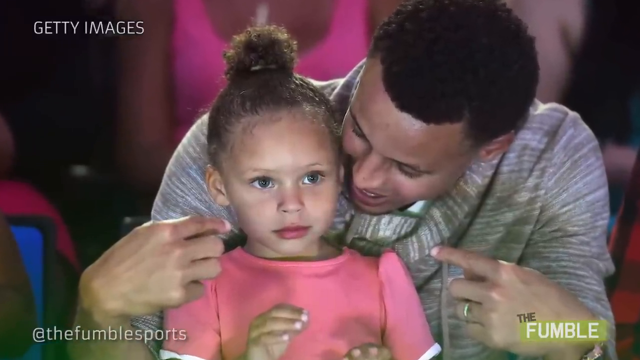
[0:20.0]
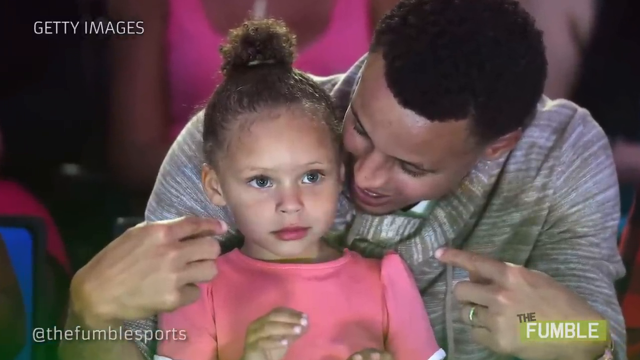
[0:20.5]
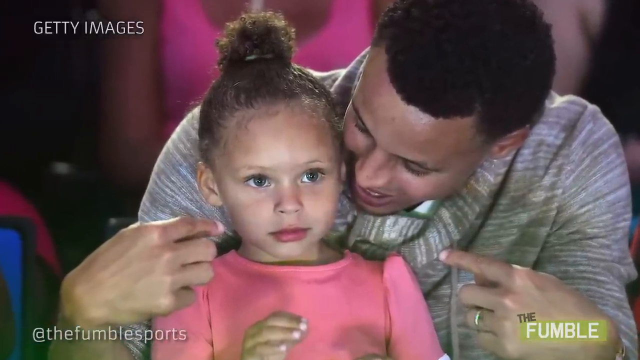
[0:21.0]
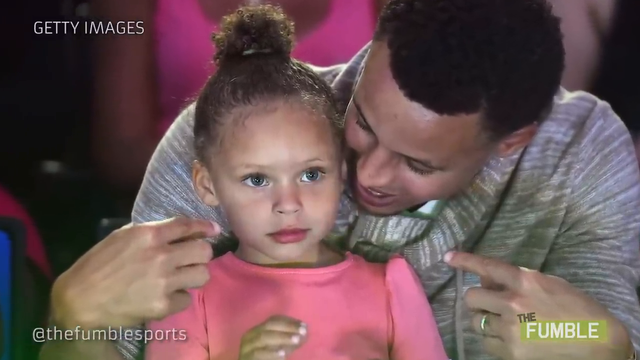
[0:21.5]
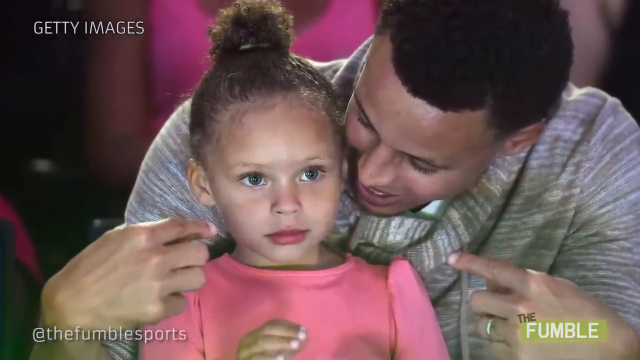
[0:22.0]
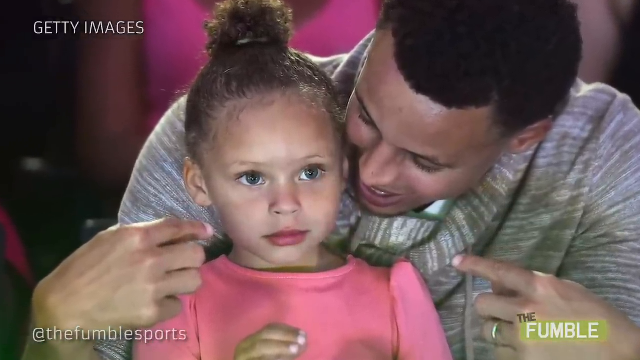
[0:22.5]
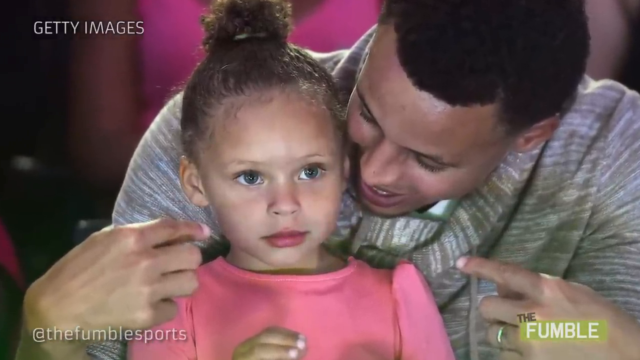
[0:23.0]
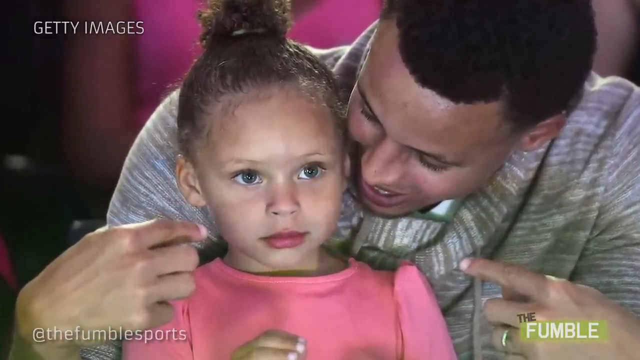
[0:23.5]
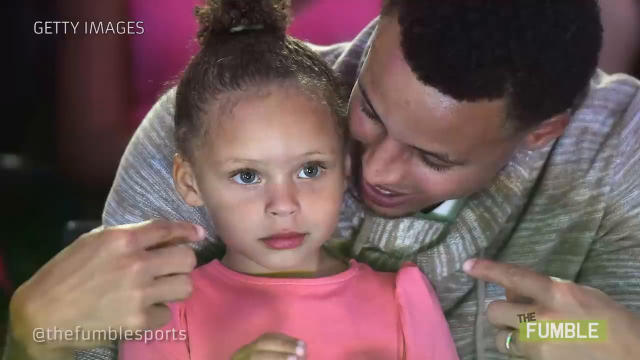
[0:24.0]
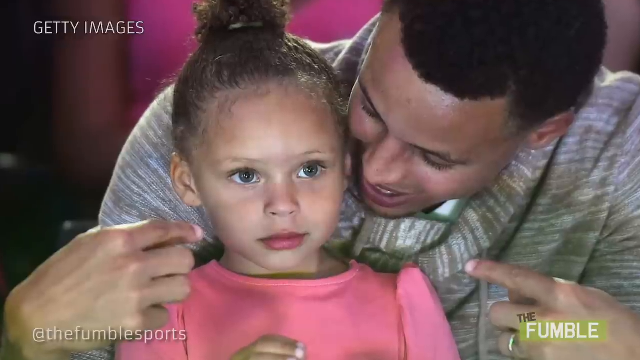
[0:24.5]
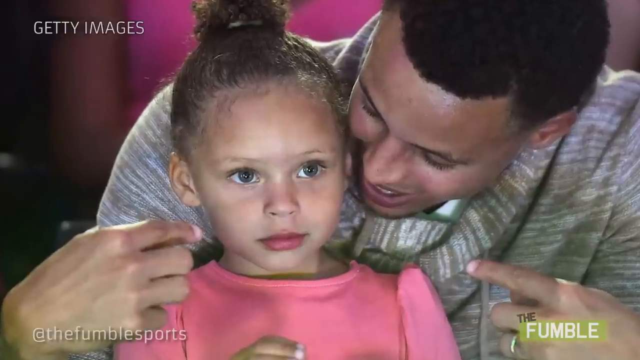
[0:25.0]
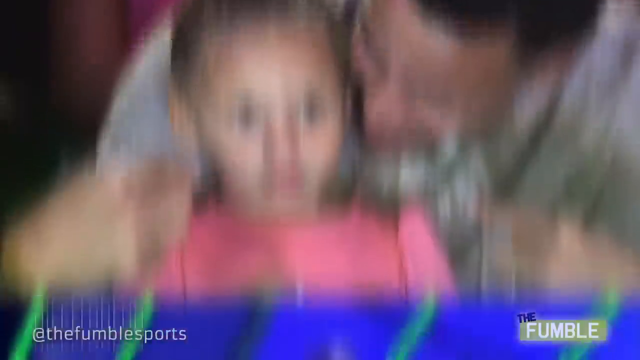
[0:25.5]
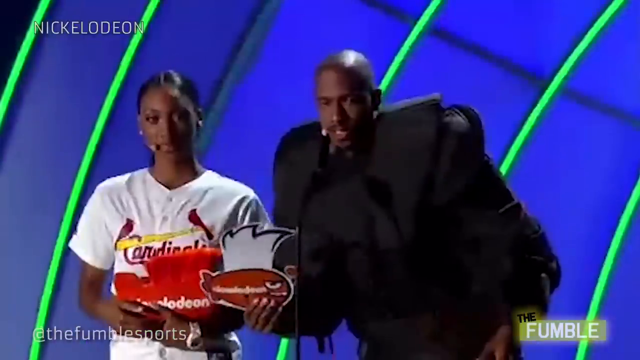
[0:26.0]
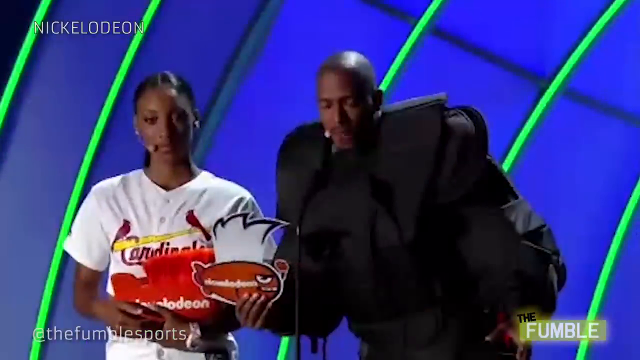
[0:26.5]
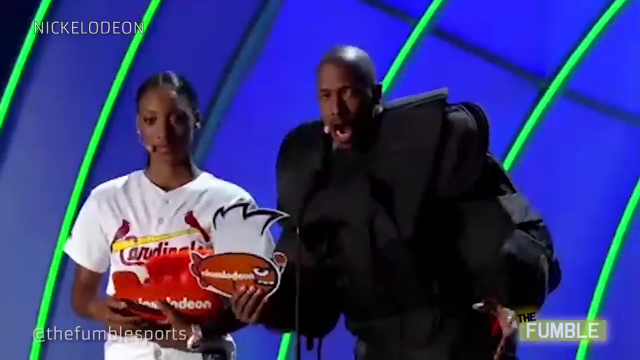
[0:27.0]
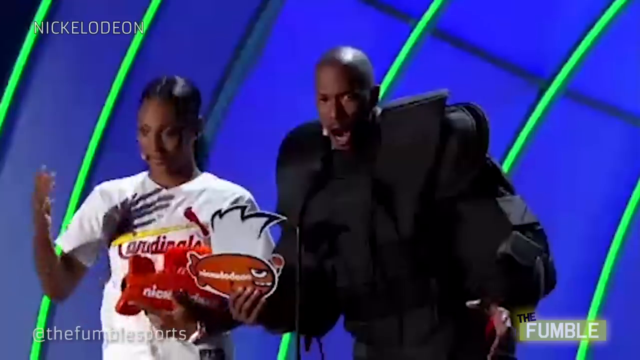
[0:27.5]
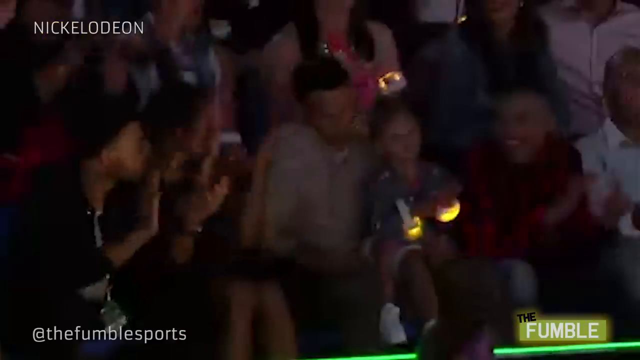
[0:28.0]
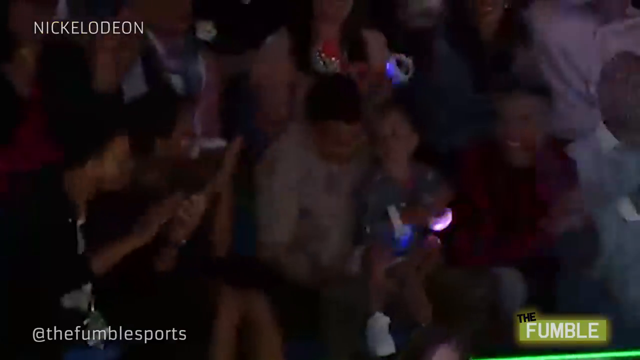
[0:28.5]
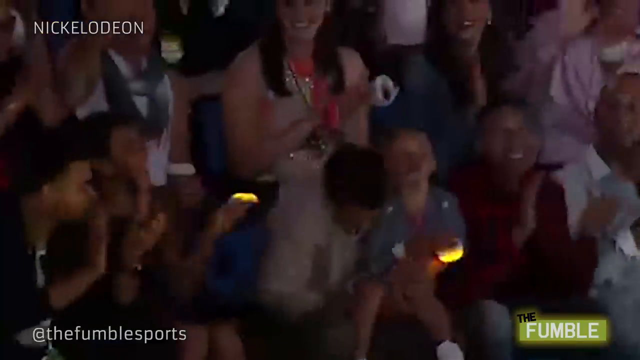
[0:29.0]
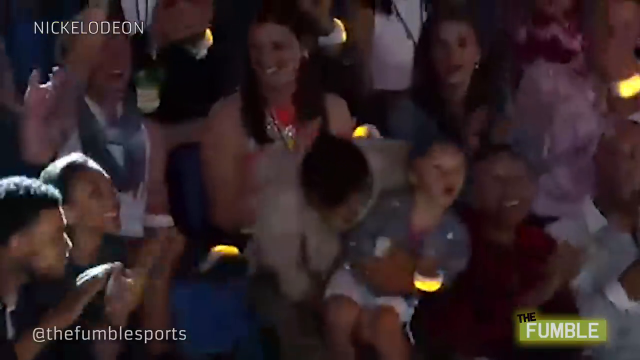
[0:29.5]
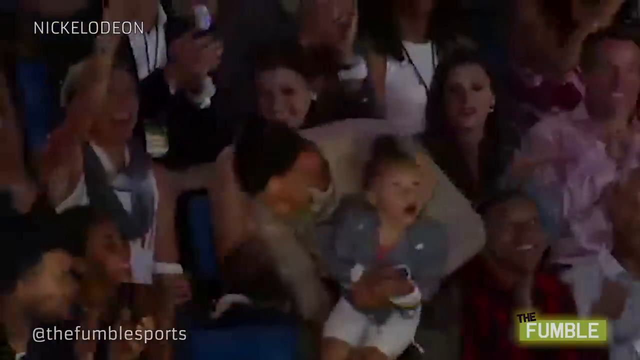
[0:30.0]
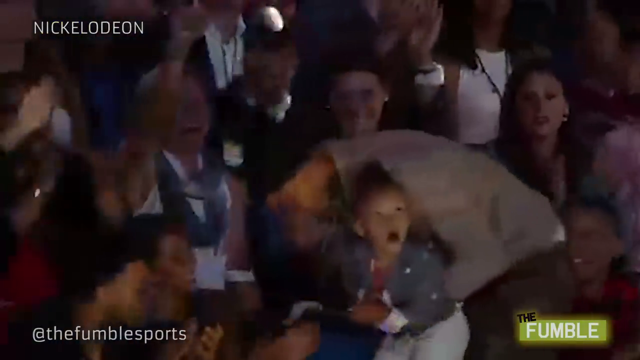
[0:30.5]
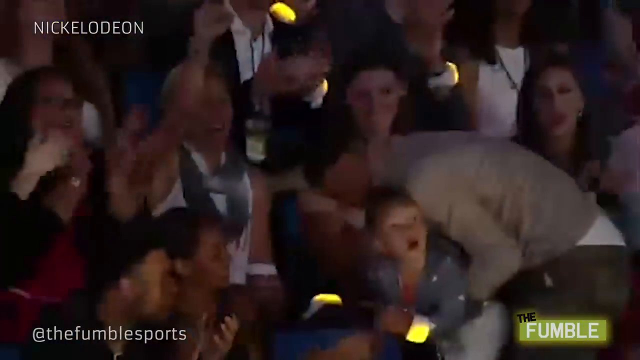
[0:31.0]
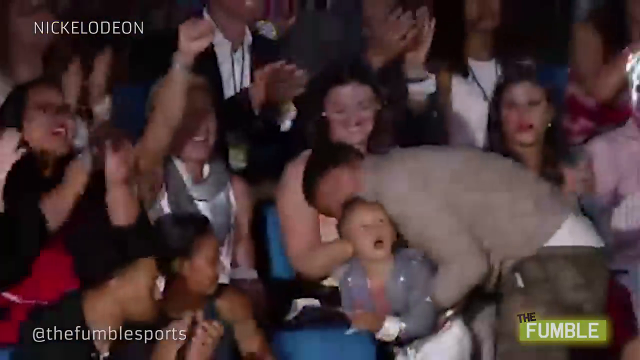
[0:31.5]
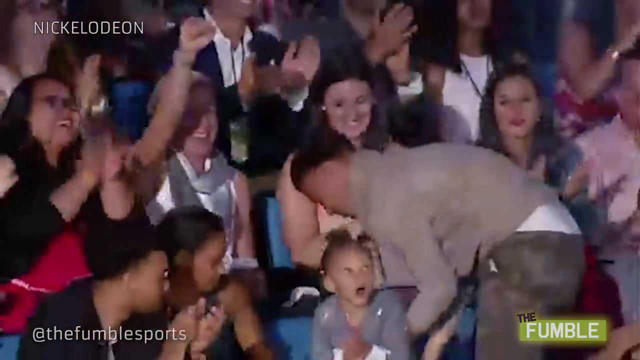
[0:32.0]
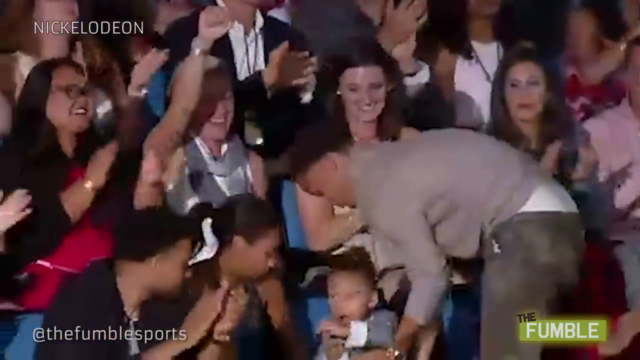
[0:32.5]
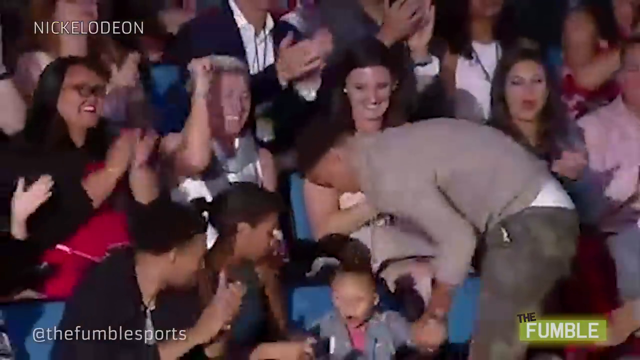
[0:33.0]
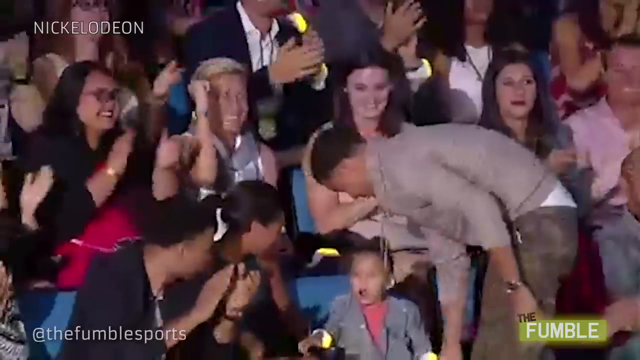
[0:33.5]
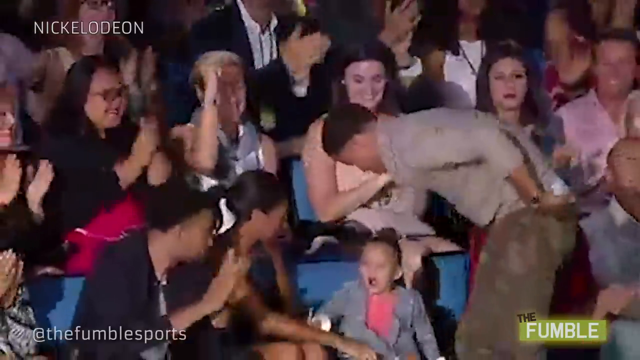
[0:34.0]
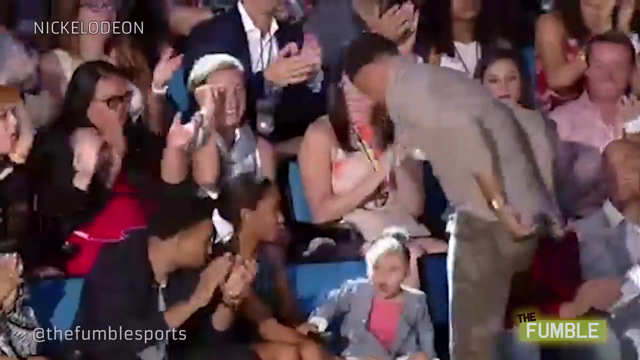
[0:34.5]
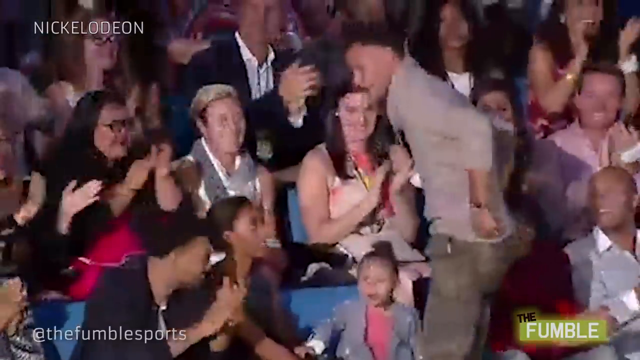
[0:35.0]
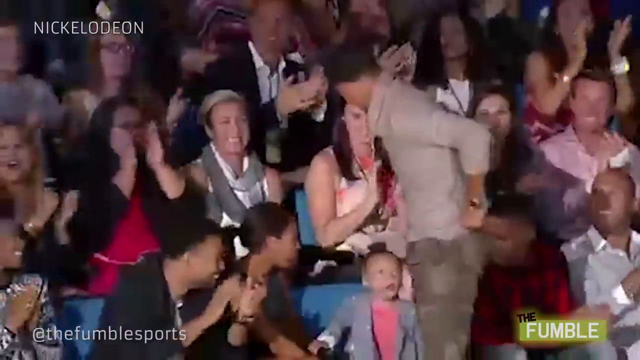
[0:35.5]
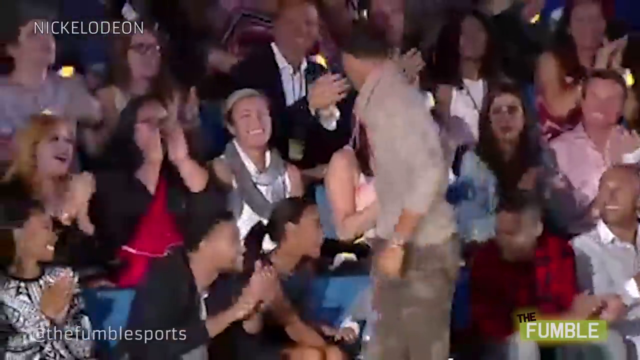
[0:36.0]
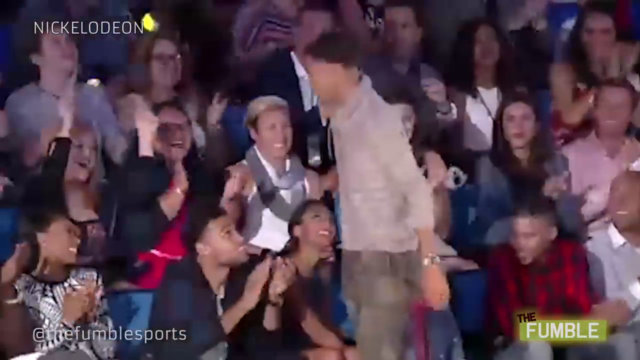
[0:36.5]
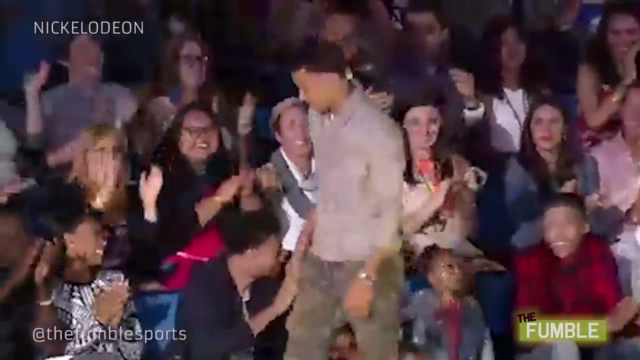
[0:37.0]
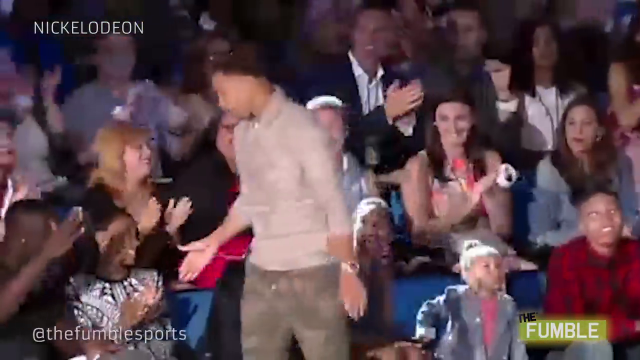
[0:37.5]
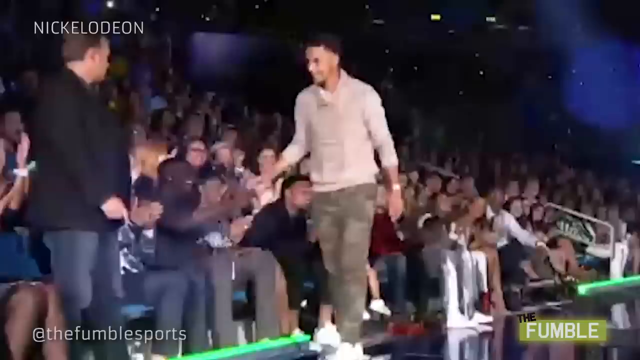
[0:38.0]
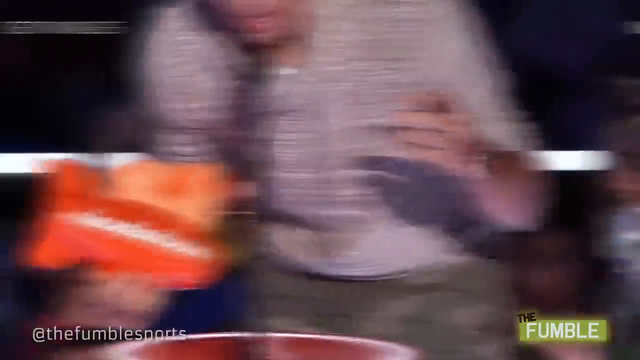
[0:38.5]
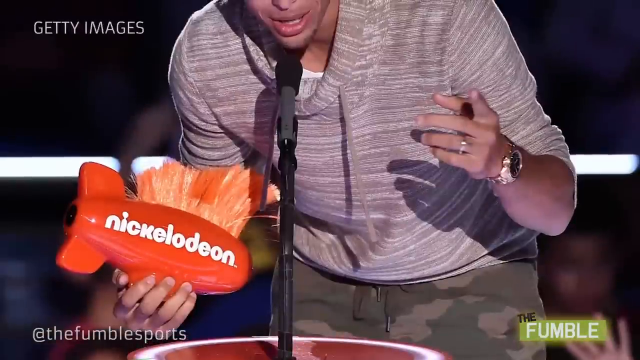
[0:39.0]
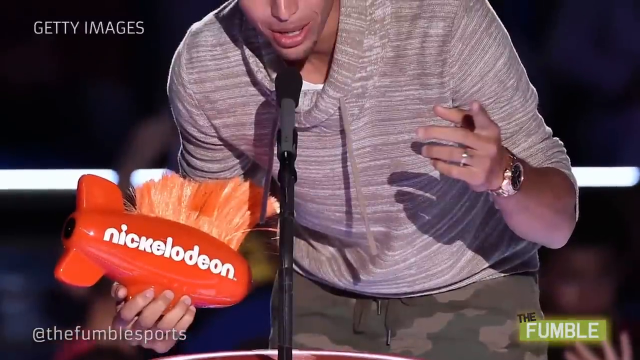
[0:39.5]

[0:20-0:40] The man is smiling and bending over. The child, probably about five years old, is sort of looking off into the distance as the camera pans in on her face. He lifts up his hands as though pointing at her. The camera continues to sort of zoom in, and then a video appears that looks like it comes from the TV station Nickelodeon. It shows two people at a podium: a very tall man wearing a very large black outfit, and a woman in a Cardinals jersey. The man holds a brown Nickelodeon statue and talks as though announcing something, then has the woman next to him lift her hands up. The audience claps while looking at a very tall man sitting with a little girl. He lifts her up and sets her down in his seat, lifts his pants up while putting his shirt down, and begins to walk to the stage.